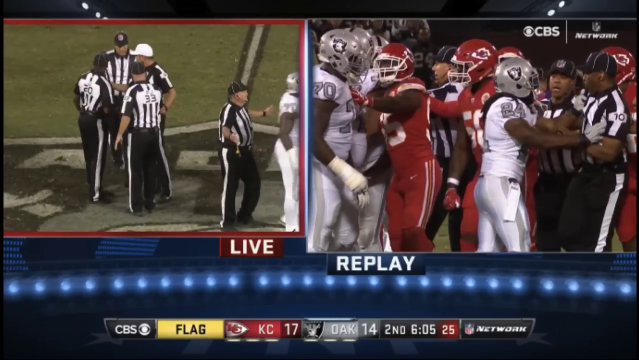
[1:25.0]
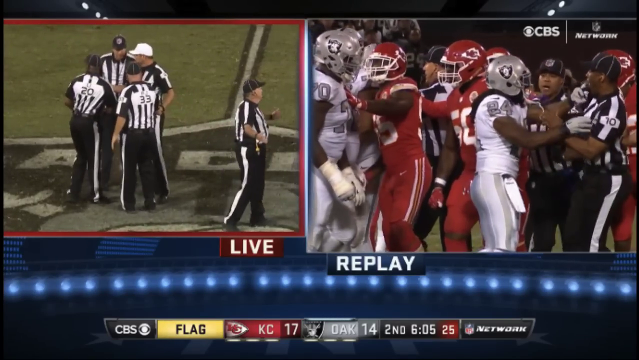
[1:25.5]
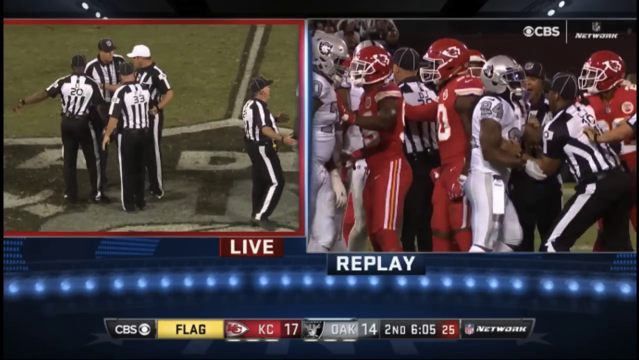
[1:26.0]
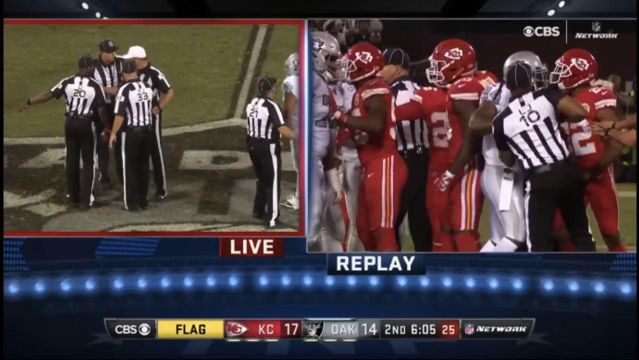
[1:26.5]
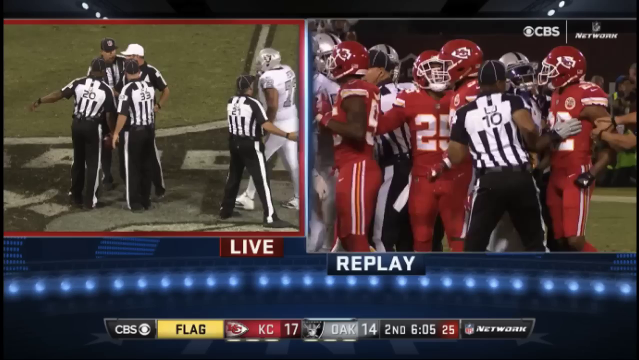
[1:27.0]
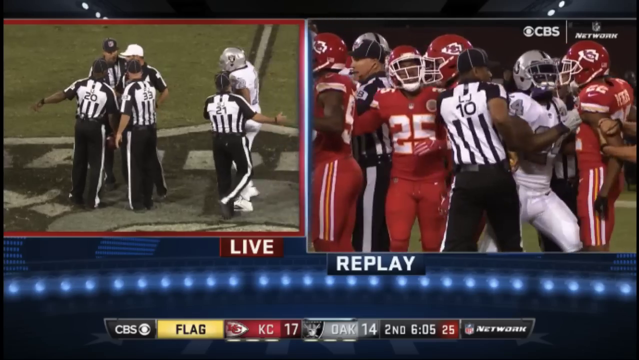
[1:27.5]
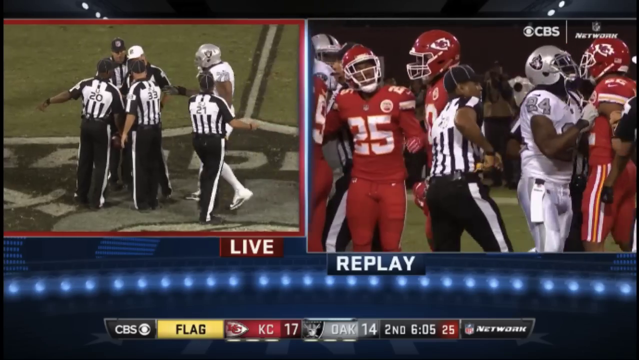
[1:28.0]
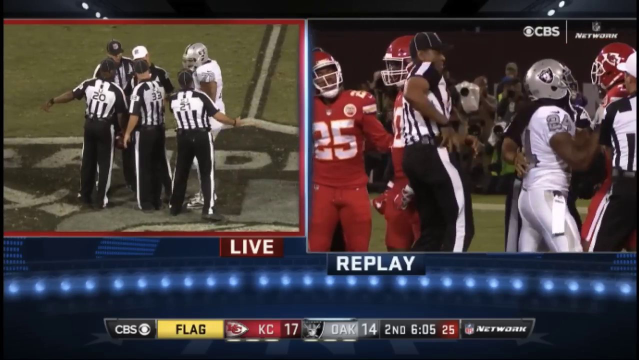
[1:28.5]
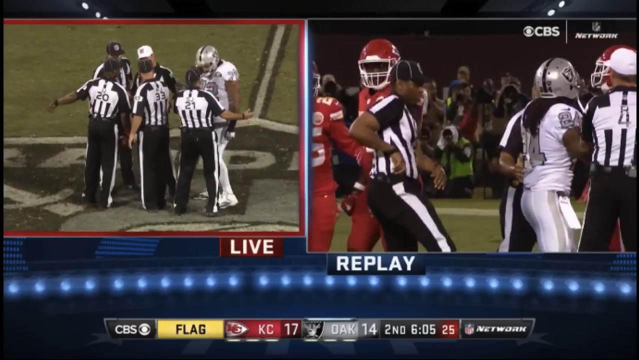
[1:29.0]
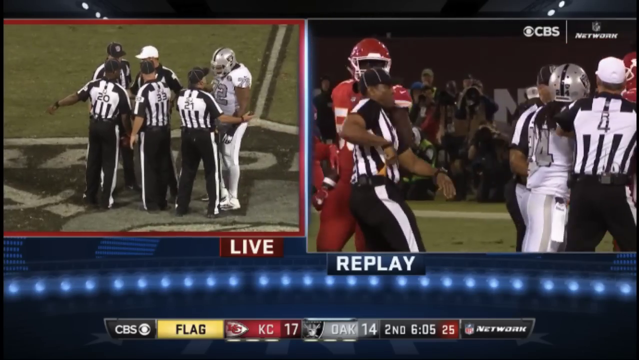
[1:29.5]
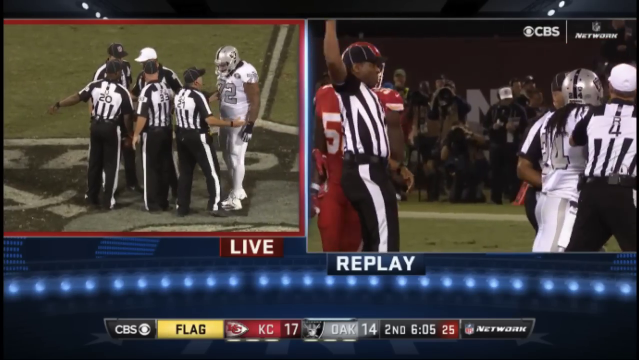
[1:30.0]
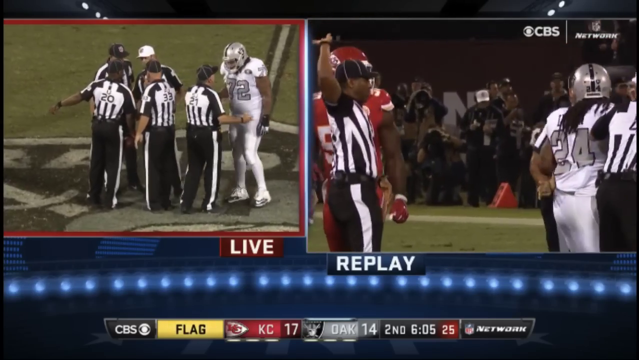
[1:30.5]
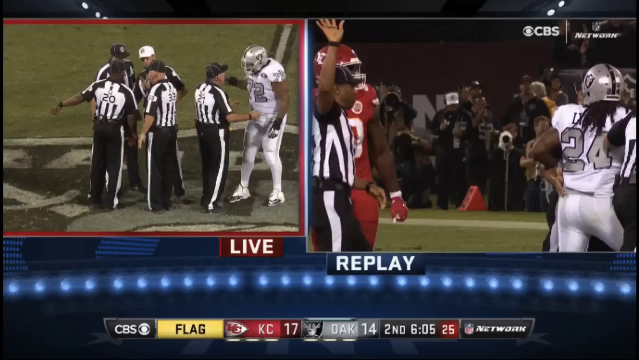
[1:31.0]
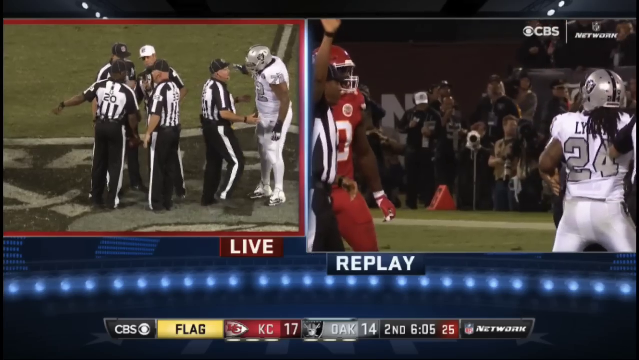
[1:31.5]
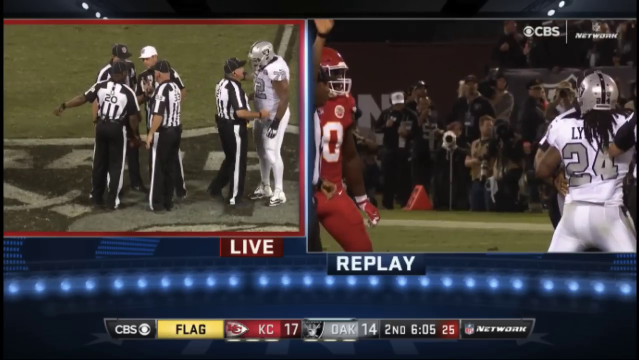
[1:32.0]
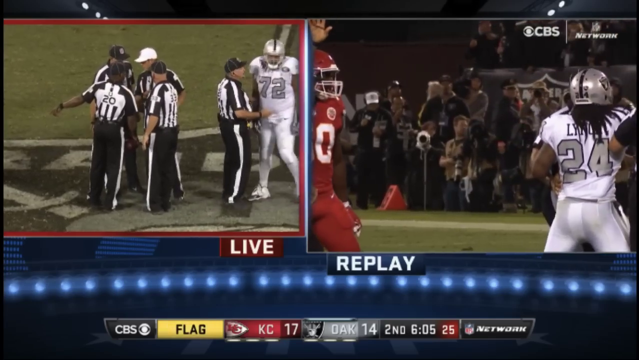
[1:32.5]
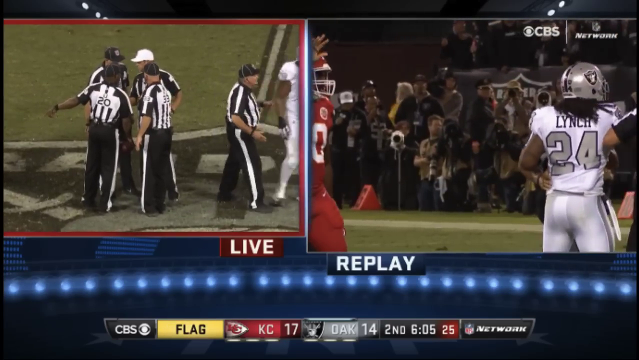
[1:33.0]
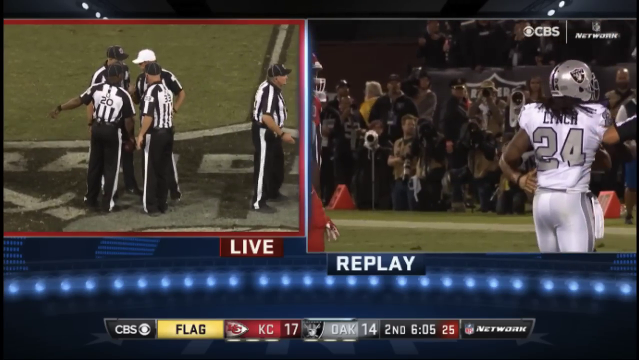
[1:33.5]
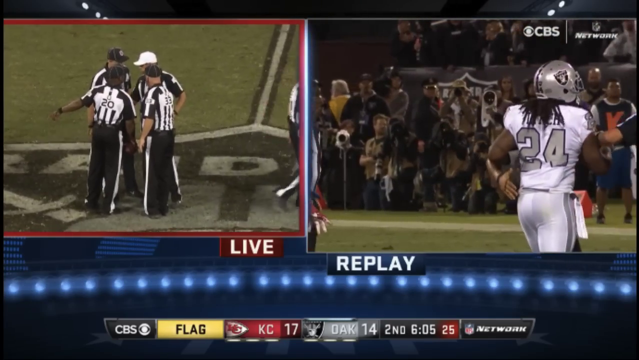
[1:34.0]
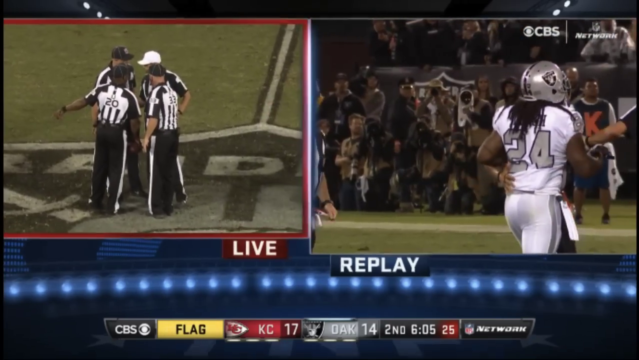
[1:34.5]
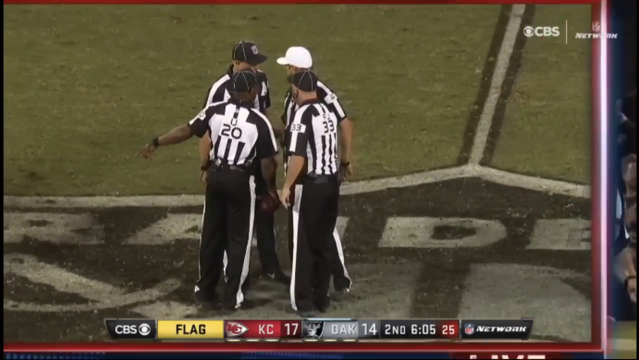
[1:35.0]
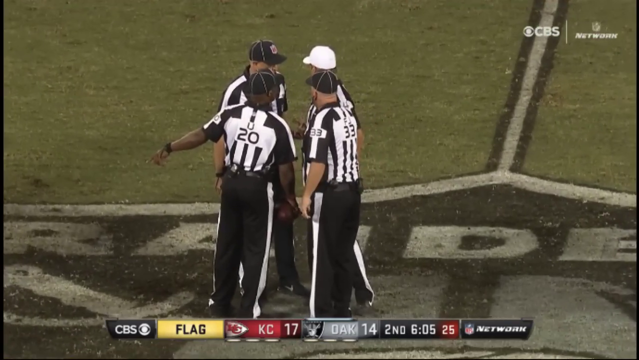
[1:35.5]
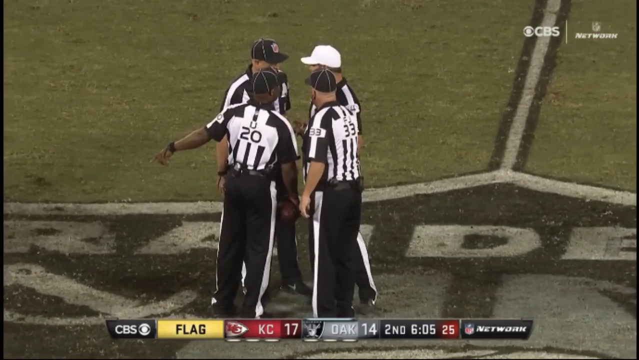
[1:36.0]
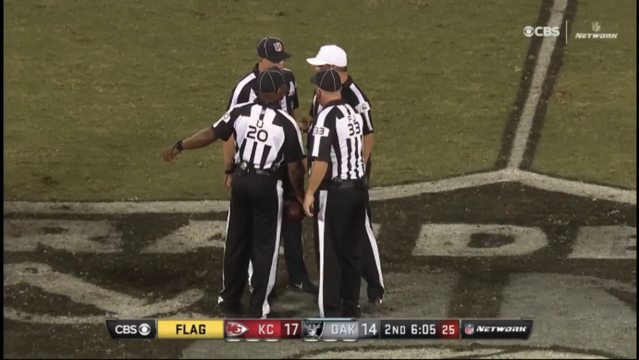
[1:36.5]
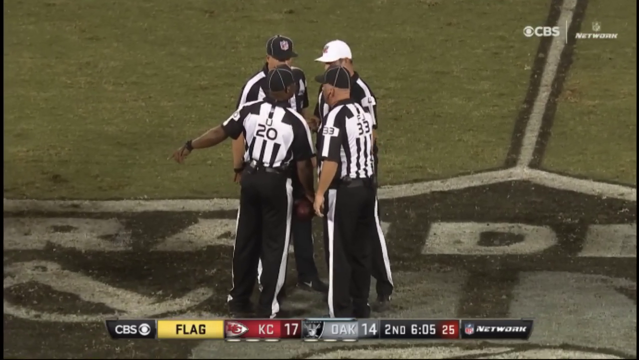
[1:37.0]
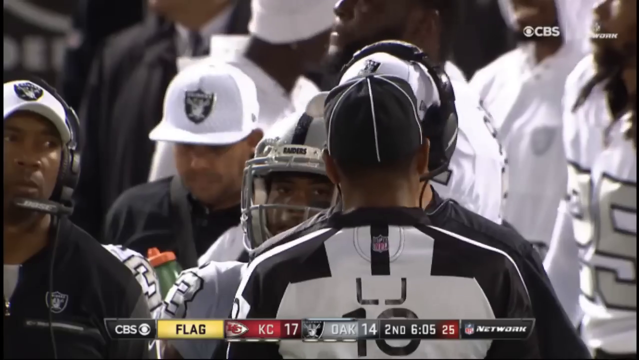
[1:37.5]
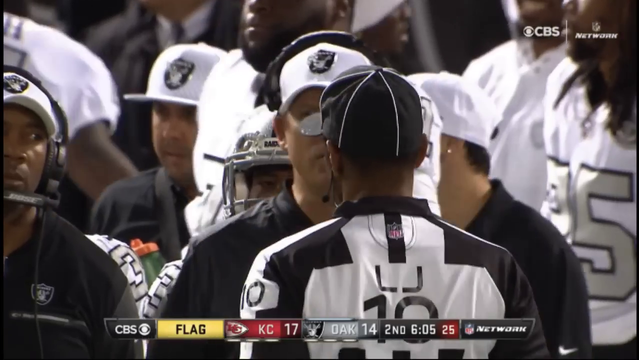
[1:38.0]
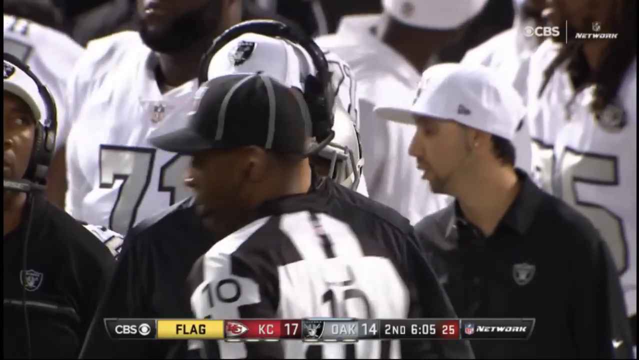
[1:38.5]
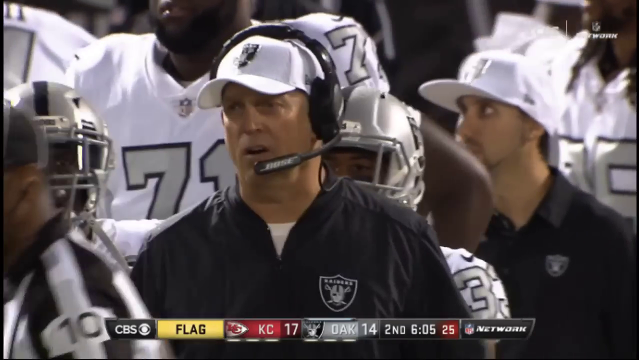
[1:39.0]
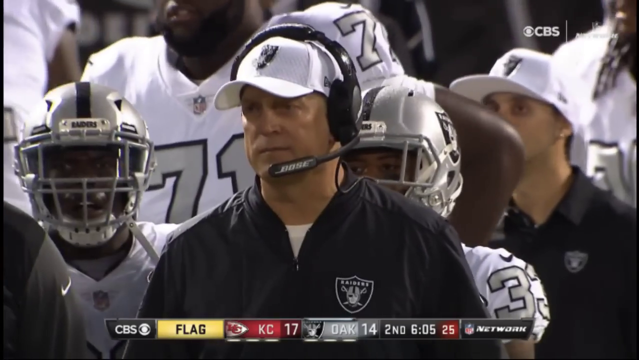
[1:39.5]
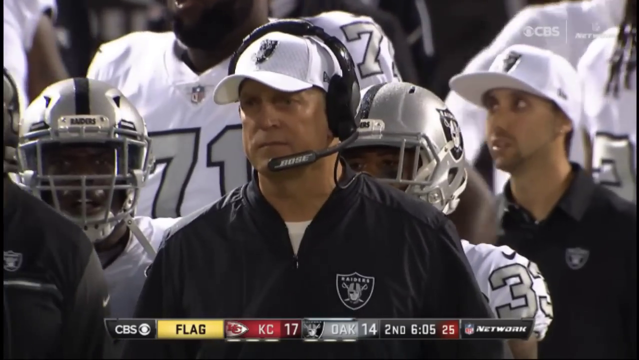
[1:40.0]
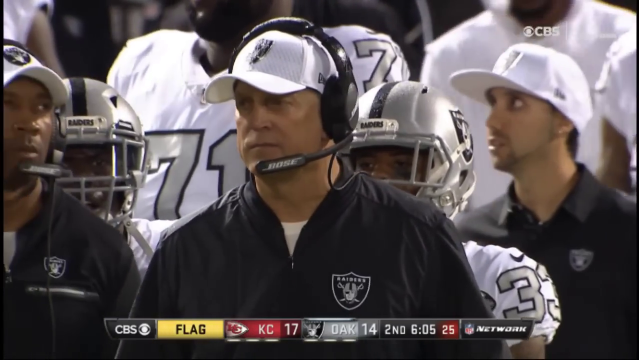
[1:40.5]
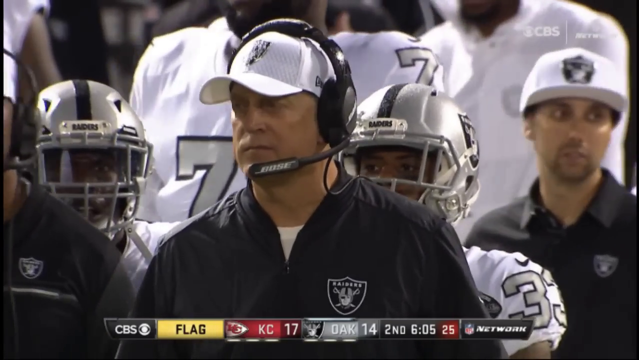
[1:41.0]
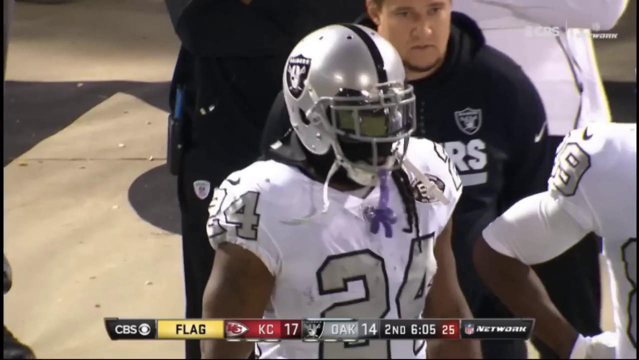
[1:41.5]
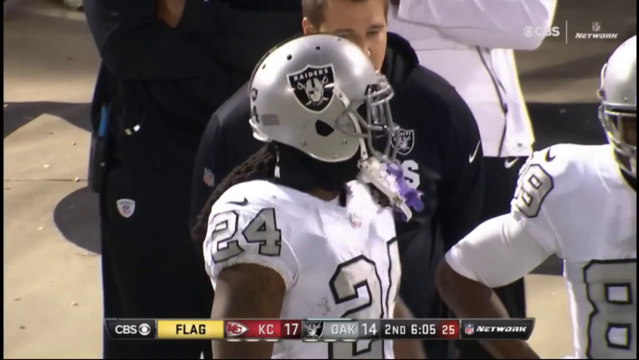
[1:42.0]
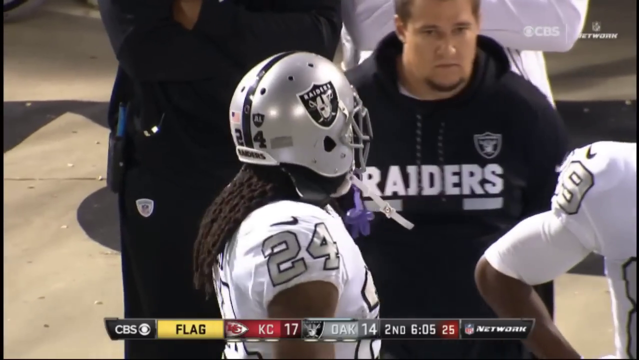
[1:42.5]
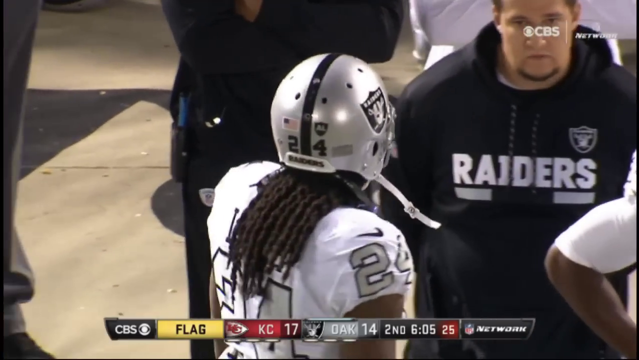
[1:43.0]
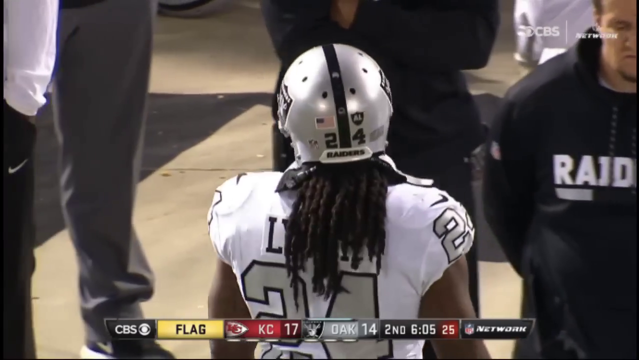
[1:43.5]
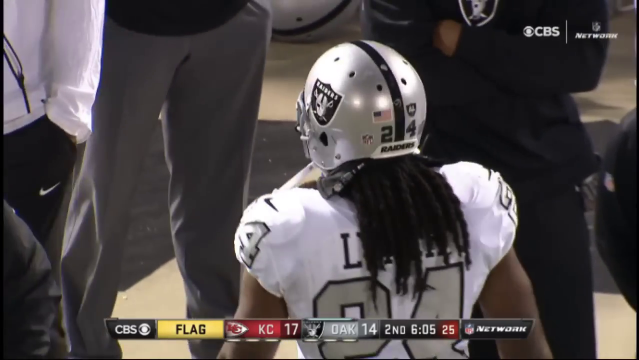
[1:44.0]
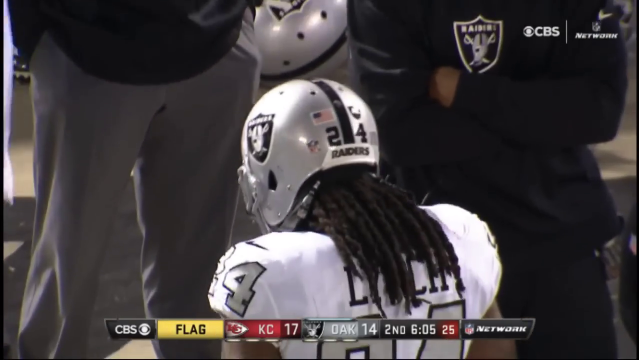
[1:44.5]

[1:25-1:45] The video is titled Marshawn Lynch Gets Ejected for Grabbing a Referee Chiefs vs Raiders NFL. A typical football play ends in an altercation between Chiefs and Raiders players. The referees get involved, and Marshawn Lynch, number 24 on the Raiders, grabs one of the referees. That referee throws up a yellow flag and more referees get involved. Up-close shots show the referees talking to the players as Marshawn Lynch walks off the field. In a split screen, the referees discussing the play are on the left and the altercation between the players is on the right. Along the bottom of the video, a scoreboard reads "Kansas City Chiefs 17 points vs Oakland Raiders 14 points." The broadcast is on the CBS channel. Up-close shots of the altercation show the Raiders player grabbing at the referee, who pulls the yellow flag out of his pocket. On the sidelines, the coaches for both teams discuss what is going on with their players and the referees. Finally, a single referee comes to the middle of the field and uses hand signals to announce the final call for the play.